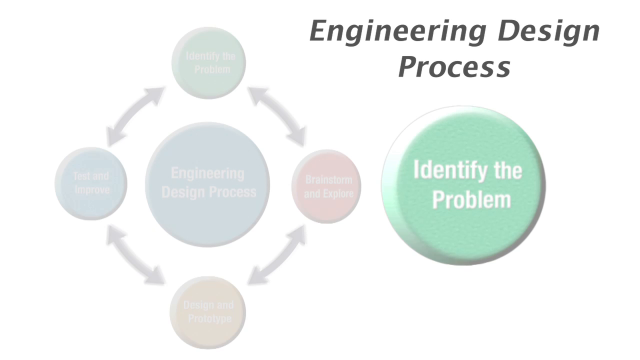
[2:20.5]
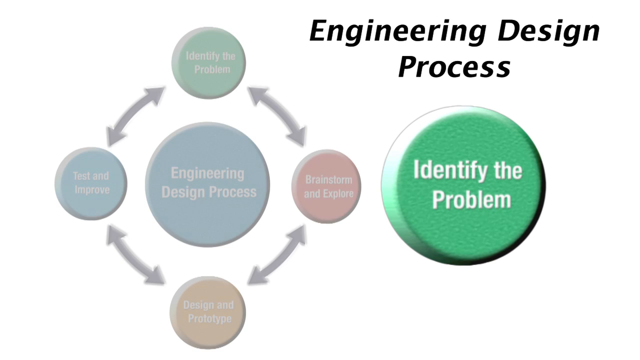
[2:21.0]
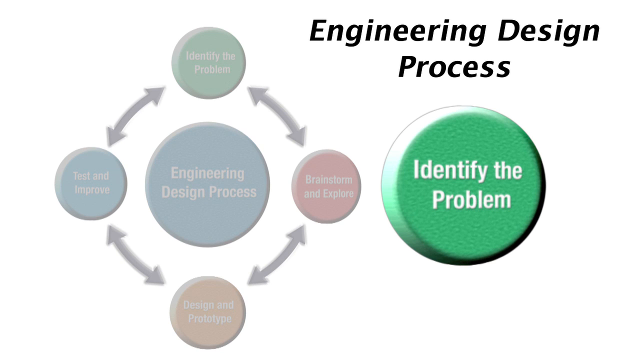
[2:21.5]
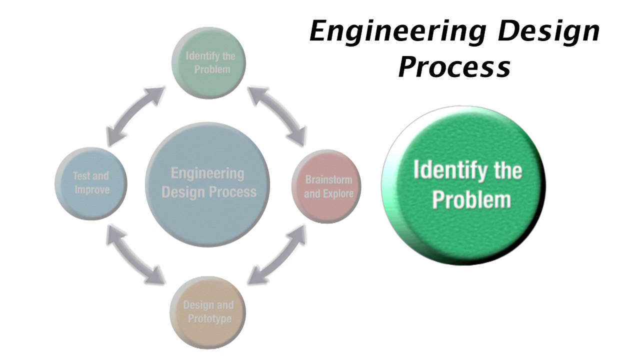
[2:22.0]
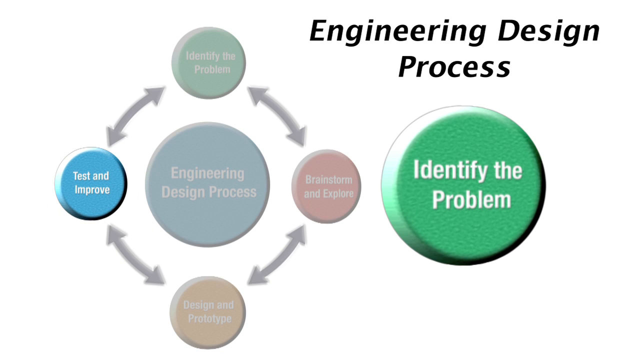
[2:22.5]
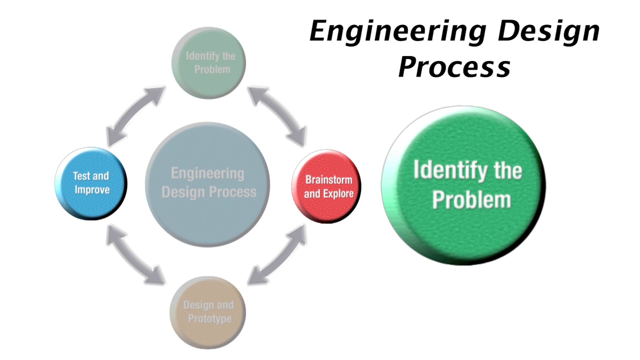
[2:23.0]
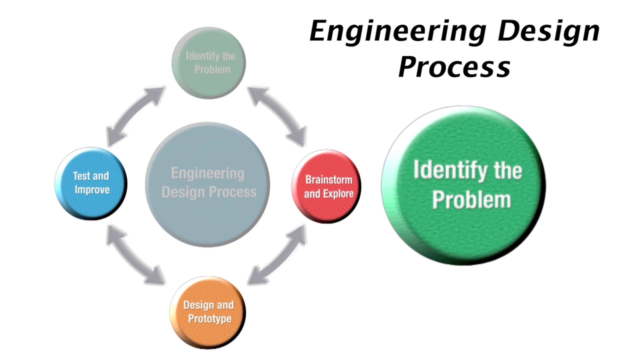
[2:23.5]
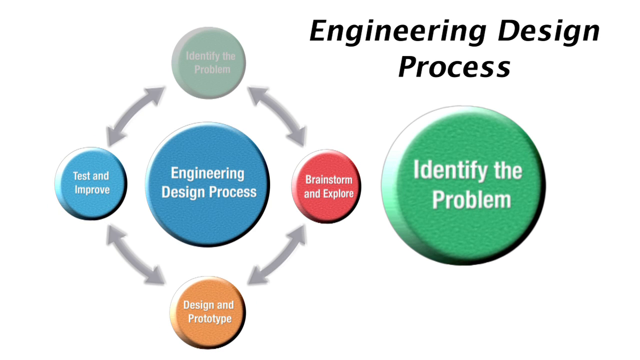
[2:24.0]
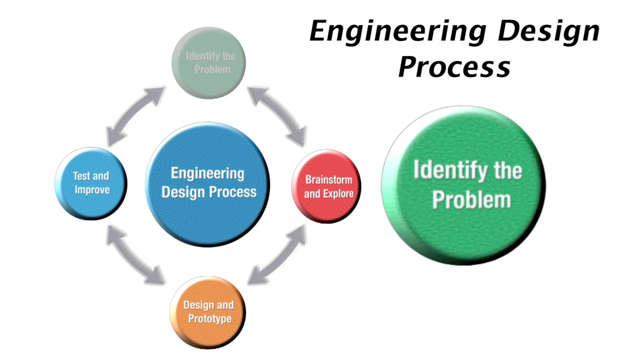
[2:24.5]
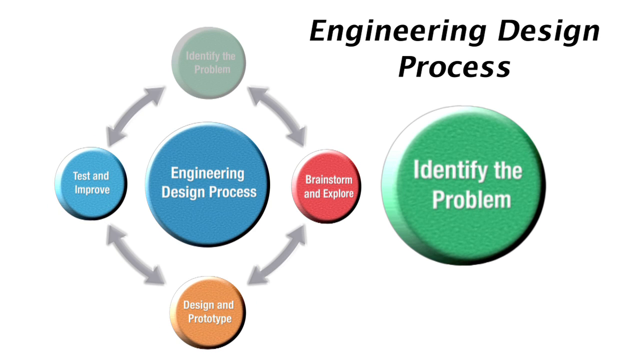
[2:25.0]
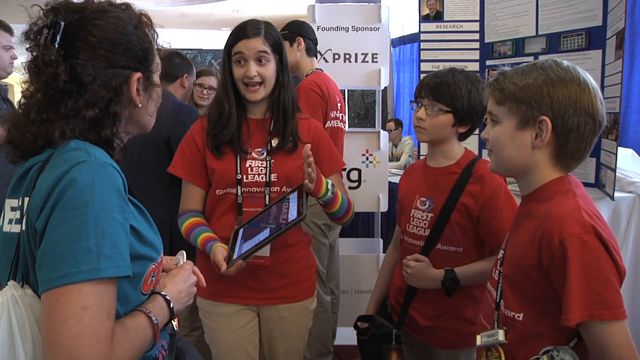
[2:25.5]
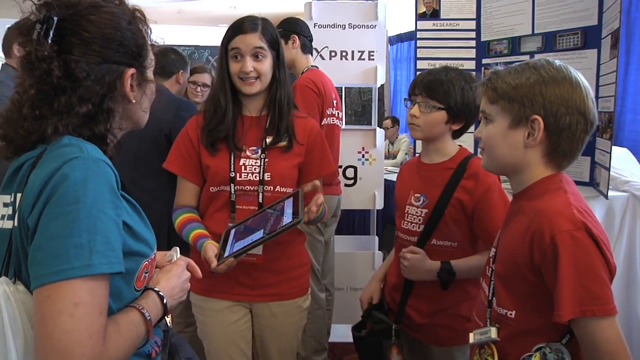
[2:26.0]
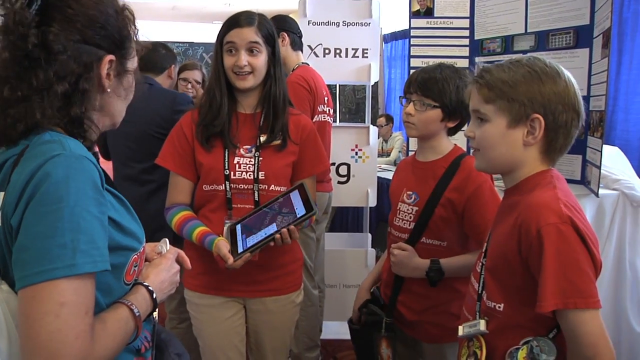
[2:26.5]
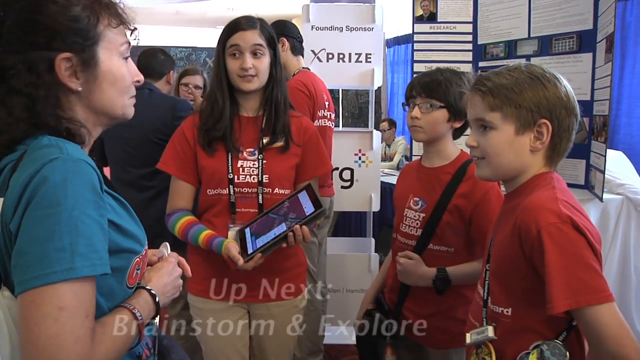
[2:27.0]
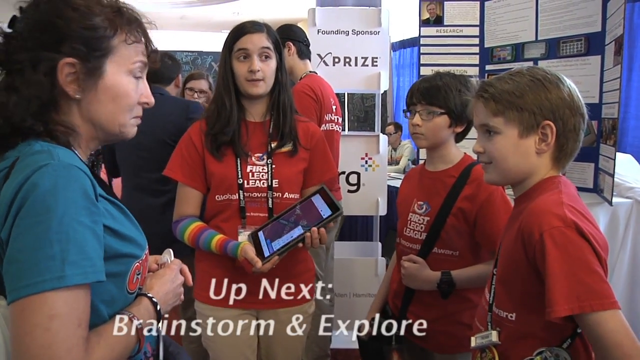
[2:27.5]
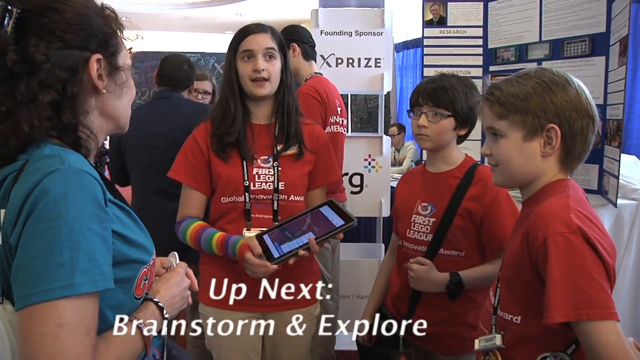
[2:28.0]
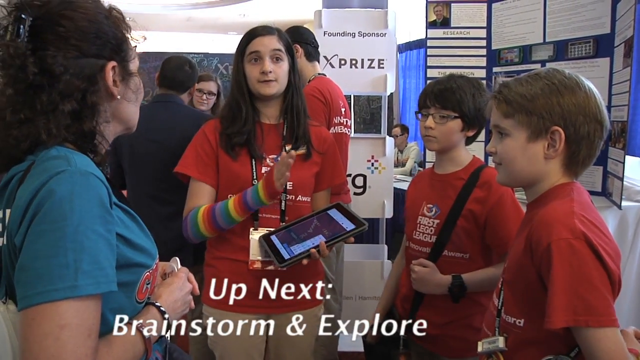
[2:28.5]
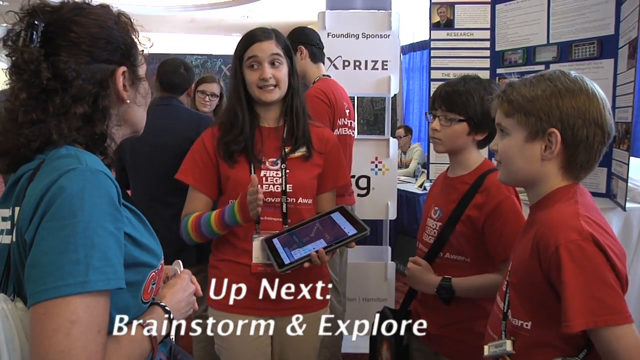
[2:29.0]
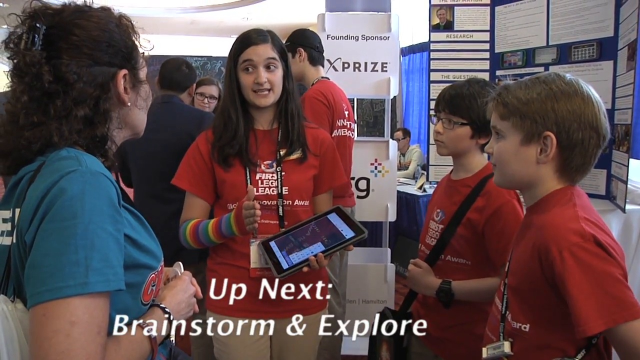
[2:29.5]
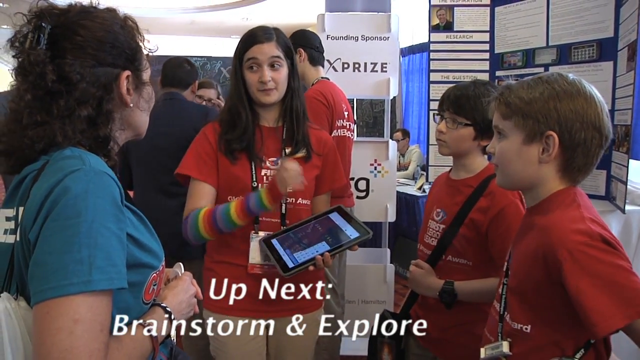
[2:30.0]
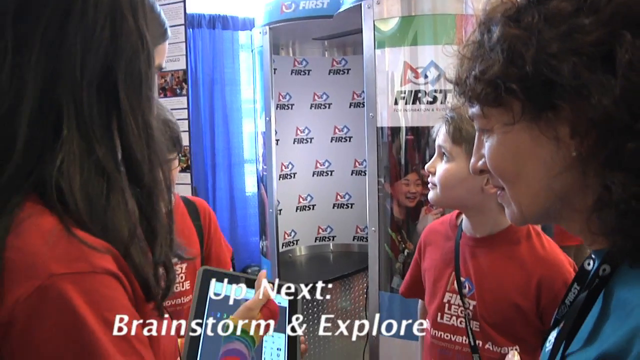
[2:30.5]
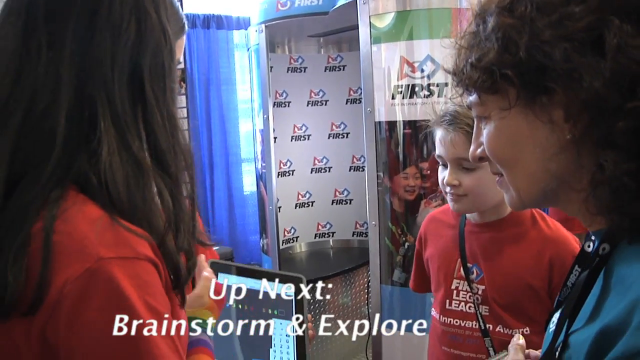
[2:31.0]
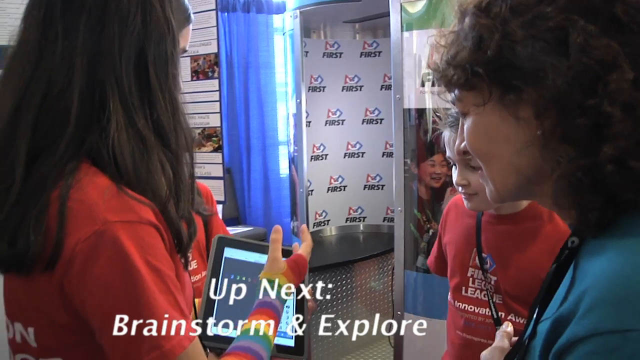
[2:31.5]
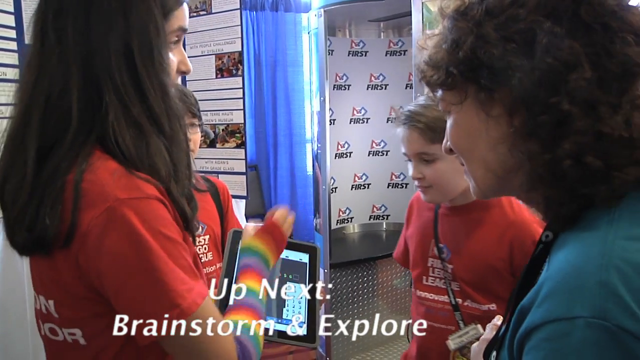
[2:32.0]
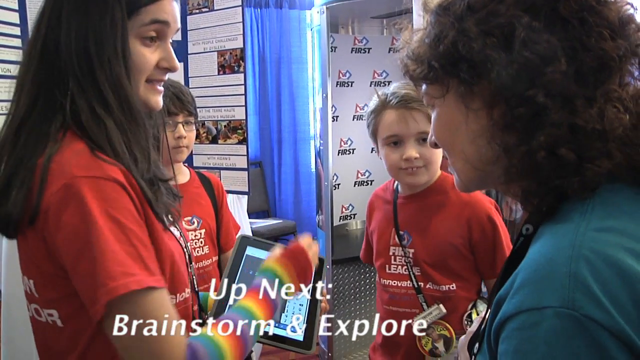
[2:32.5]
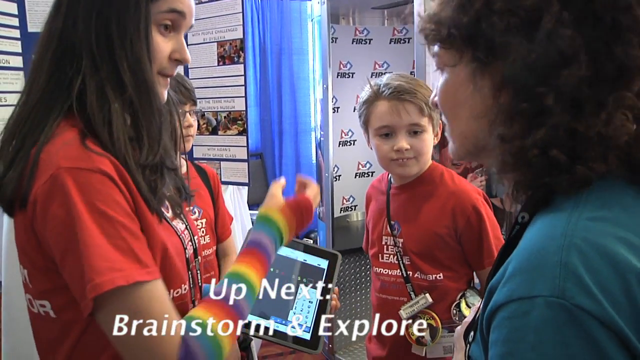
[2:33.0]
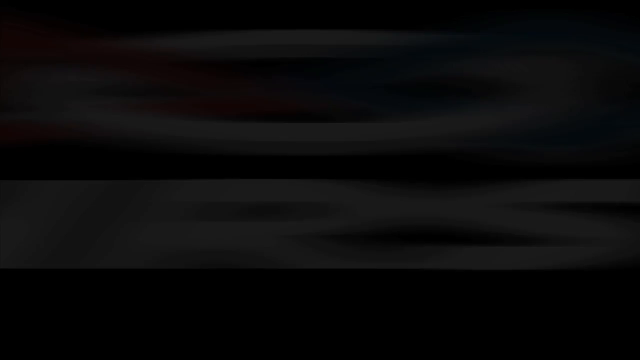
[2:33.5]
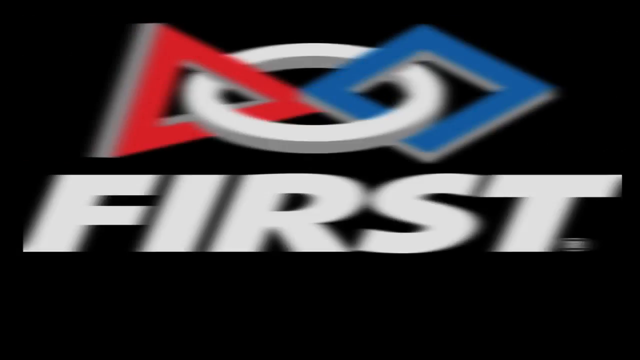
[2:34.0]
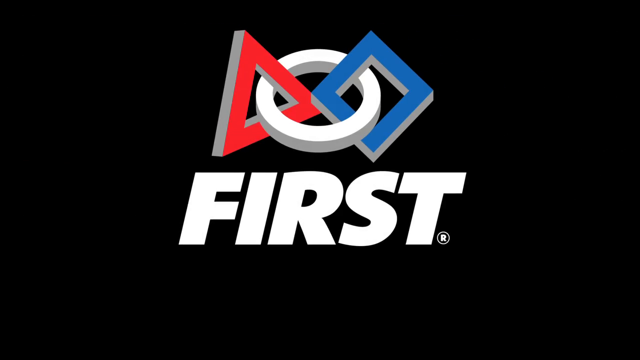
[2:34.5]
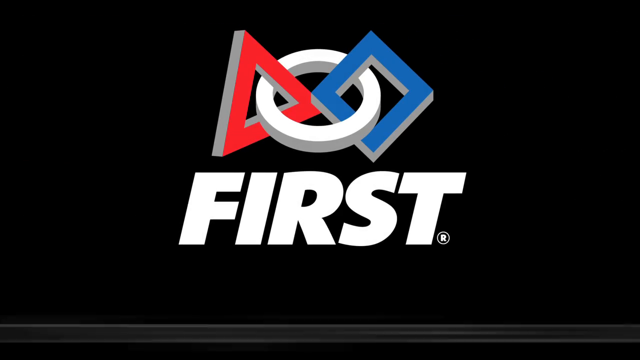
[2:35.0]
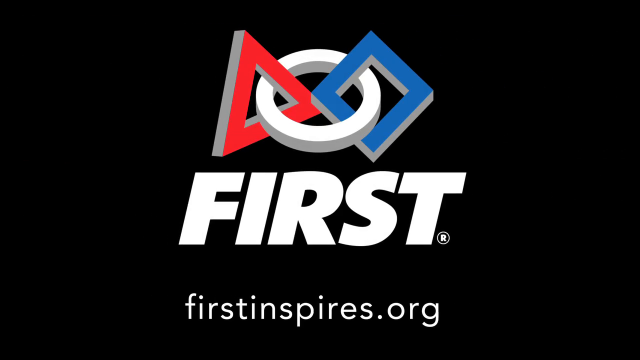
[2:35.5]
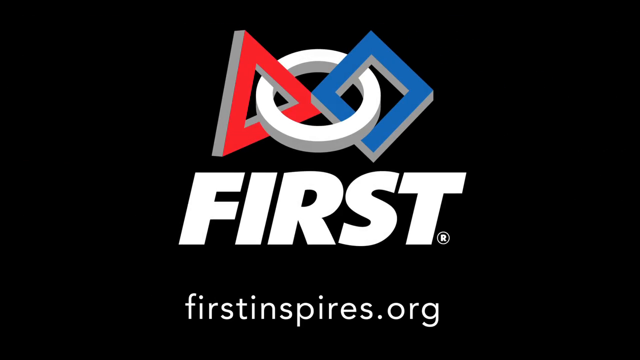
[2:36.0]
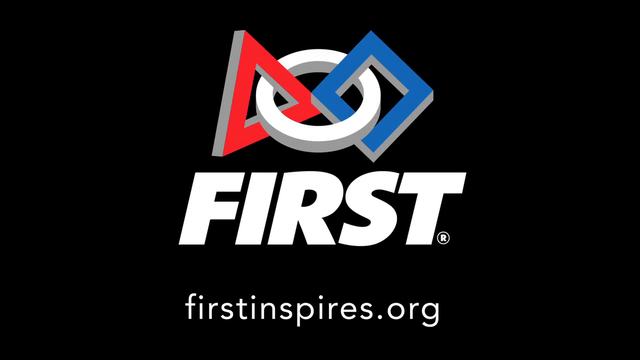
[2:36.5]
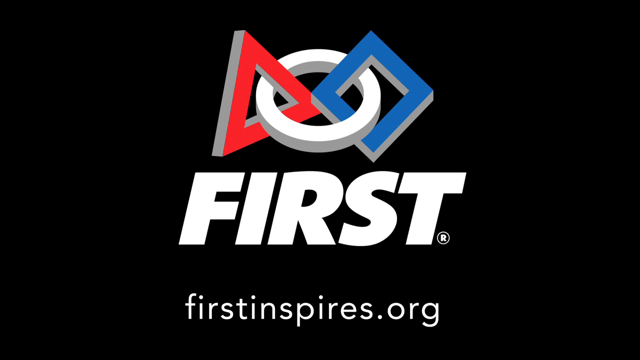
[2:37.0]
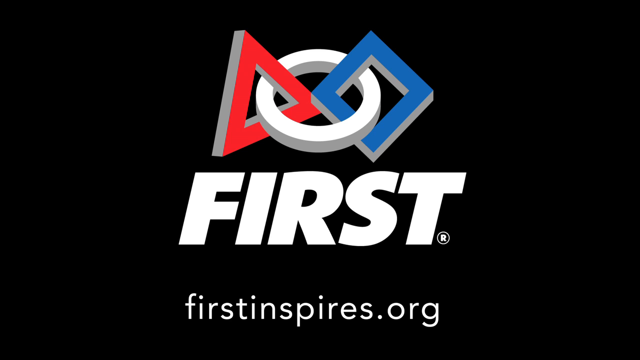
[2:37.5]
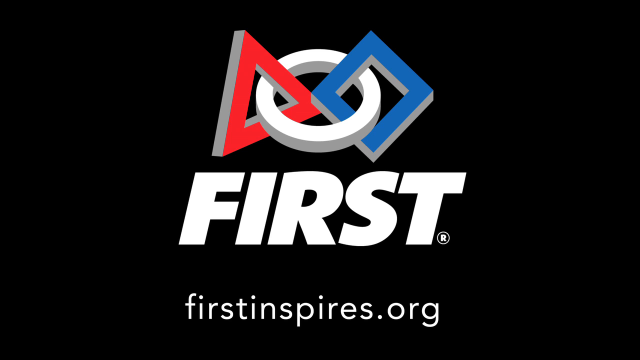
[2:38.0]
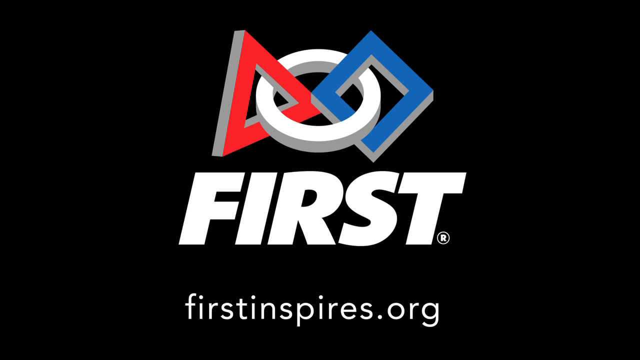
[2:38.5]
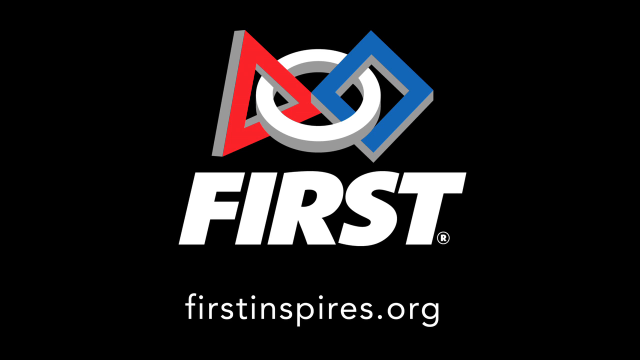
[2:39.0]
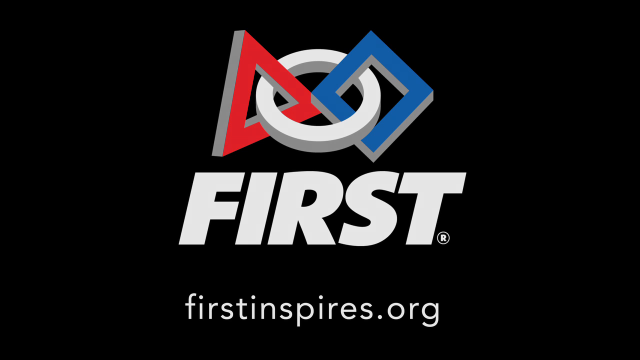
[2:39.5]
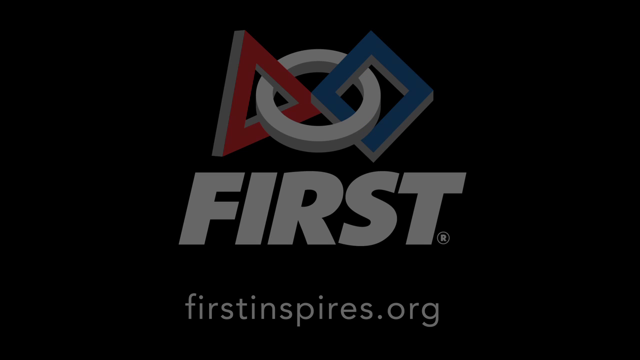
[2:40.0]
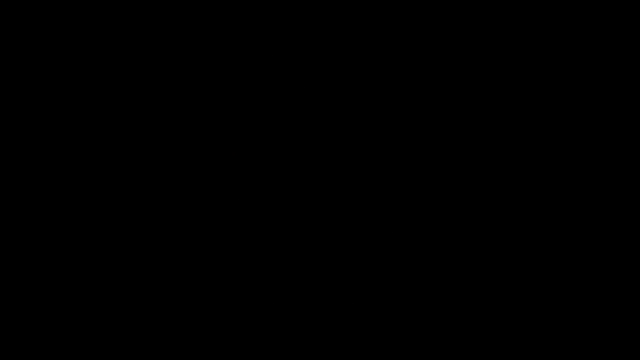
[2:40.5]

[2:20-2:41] A solid white screen appears for a second before changing to a white background with writing in the top right corner that says "engineering design process" and a mint green bubble underneath on the right side that says "identify the problem." On the left side of the screen, a group of five bubbles emerges: one large bubble in the middle and four bubbles around it, with arrows pointing both directions. The bubble at the top matches the one beside it, reading "identify the problem." Two more bubbles are then highlighted, "test and improve" and "brainstorm and explore," before the bottom bubble, "design a prototype," is shown. The scene then indicates that up next is a focus on brainstorming and ideas, and finally the first.org subscribe page is shown.